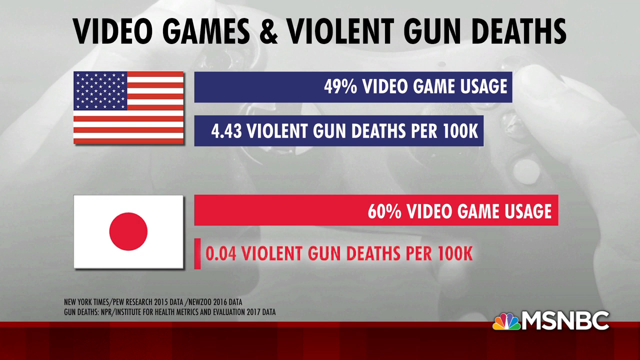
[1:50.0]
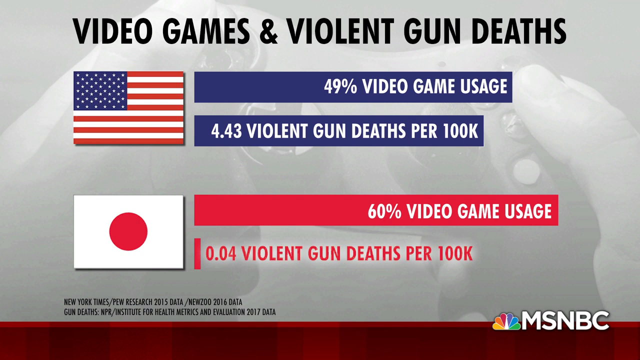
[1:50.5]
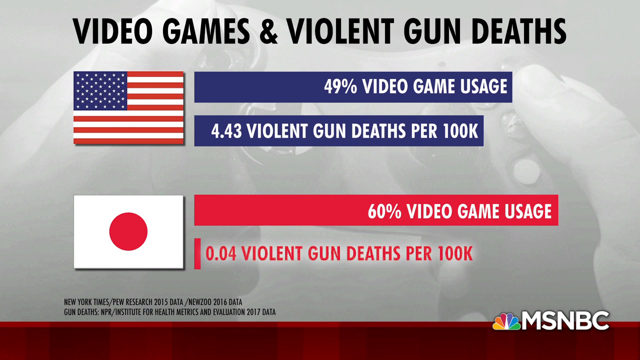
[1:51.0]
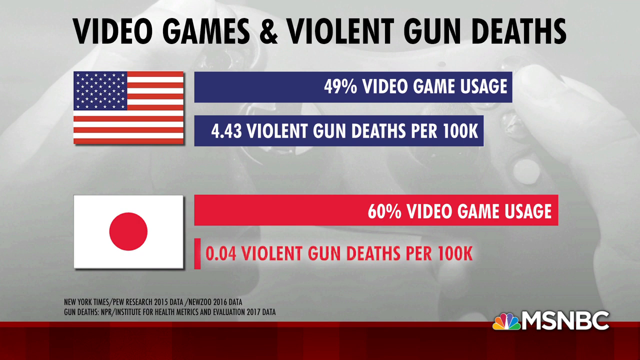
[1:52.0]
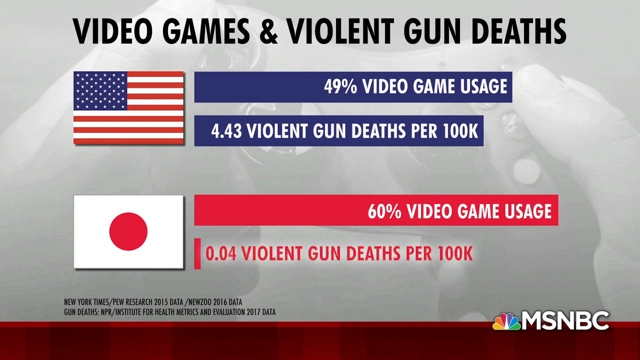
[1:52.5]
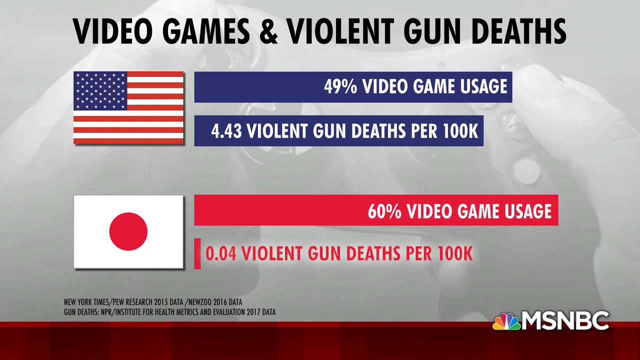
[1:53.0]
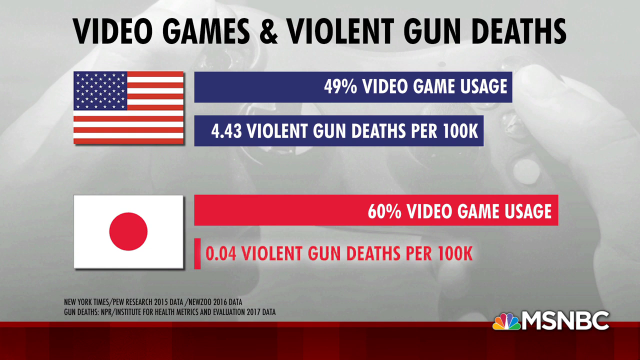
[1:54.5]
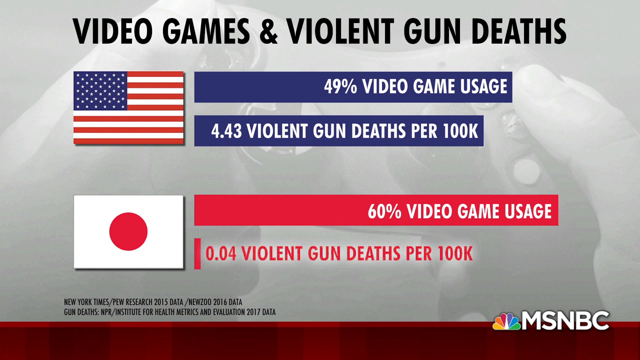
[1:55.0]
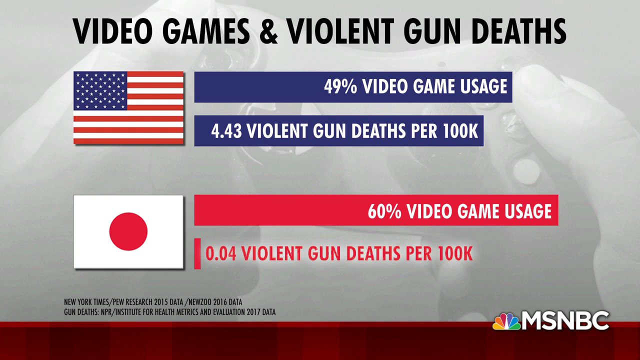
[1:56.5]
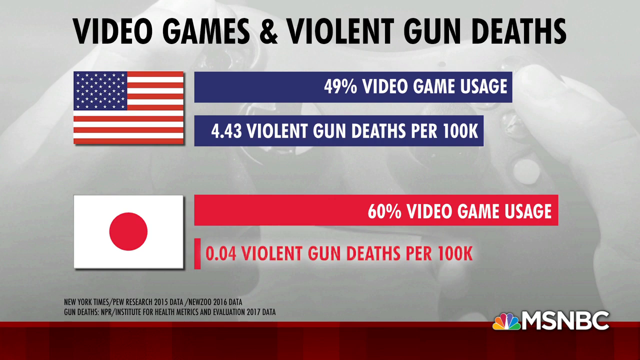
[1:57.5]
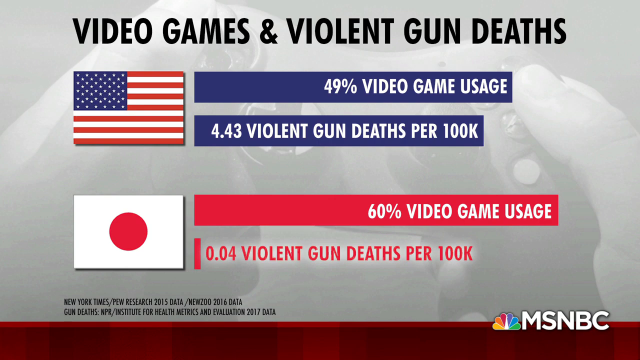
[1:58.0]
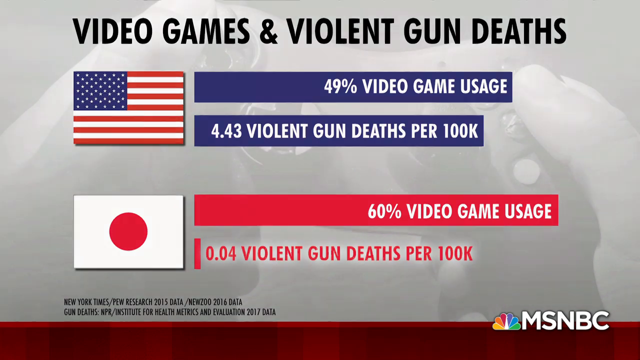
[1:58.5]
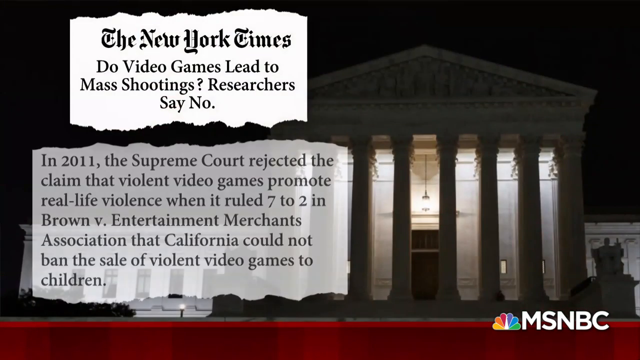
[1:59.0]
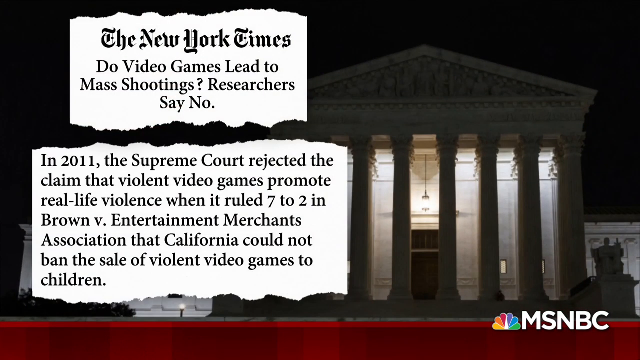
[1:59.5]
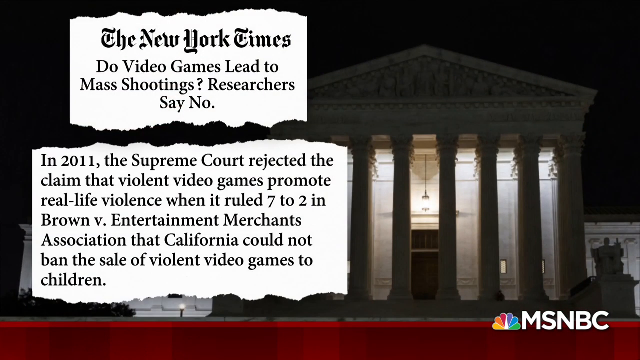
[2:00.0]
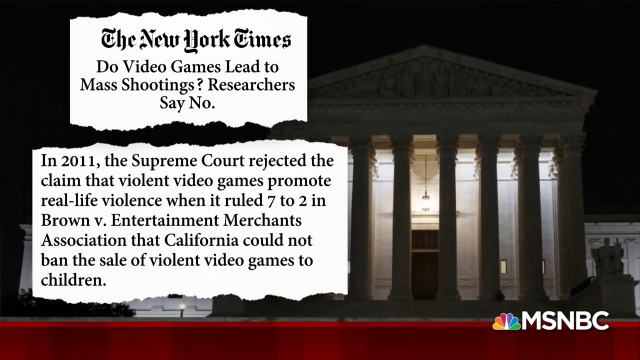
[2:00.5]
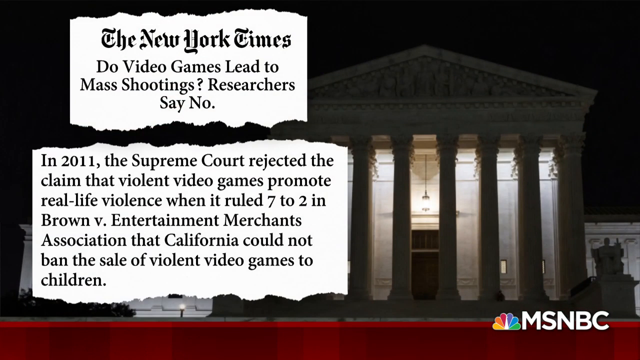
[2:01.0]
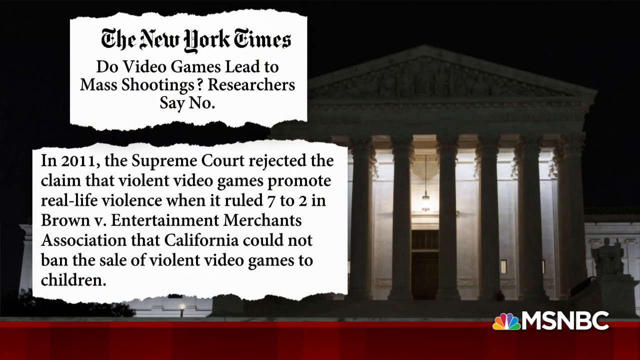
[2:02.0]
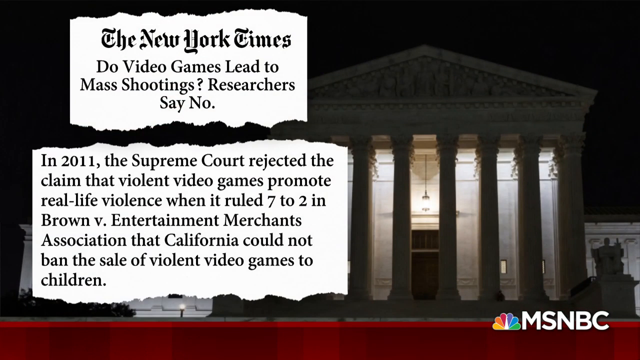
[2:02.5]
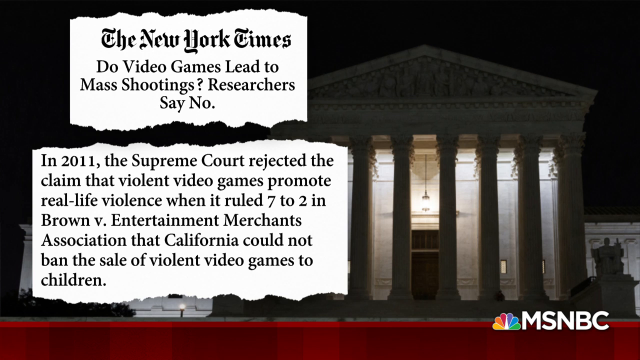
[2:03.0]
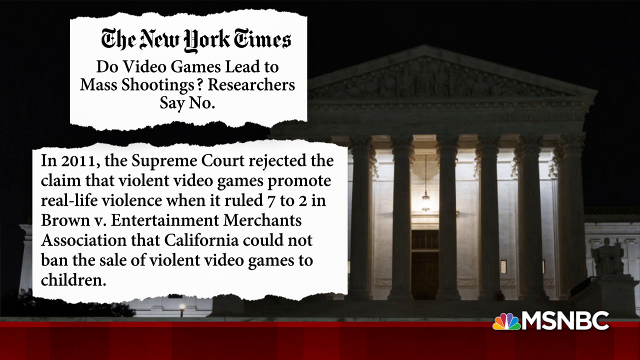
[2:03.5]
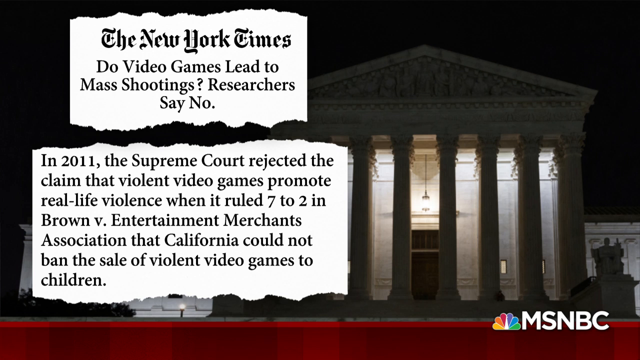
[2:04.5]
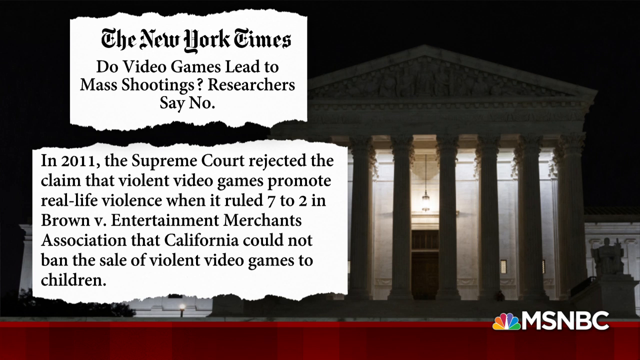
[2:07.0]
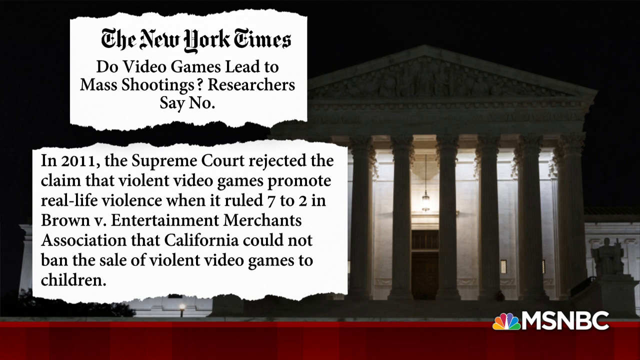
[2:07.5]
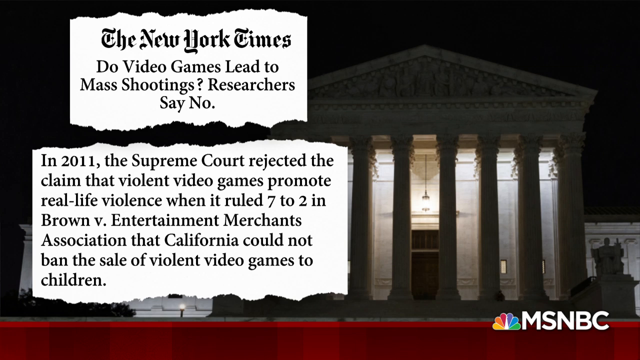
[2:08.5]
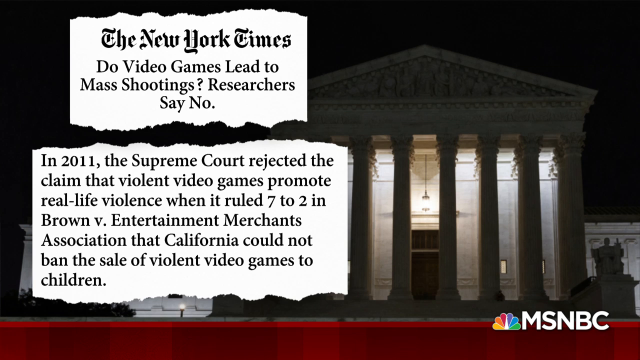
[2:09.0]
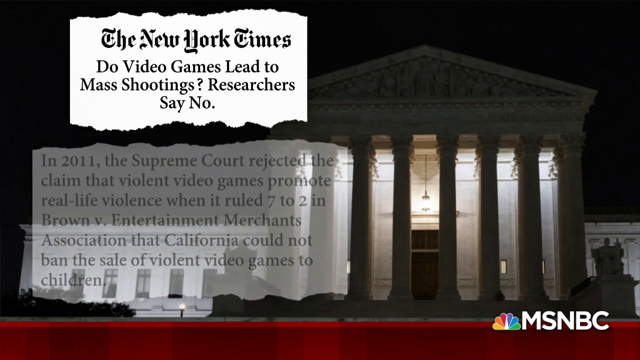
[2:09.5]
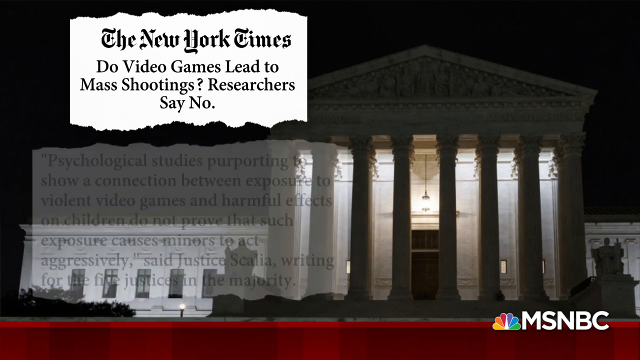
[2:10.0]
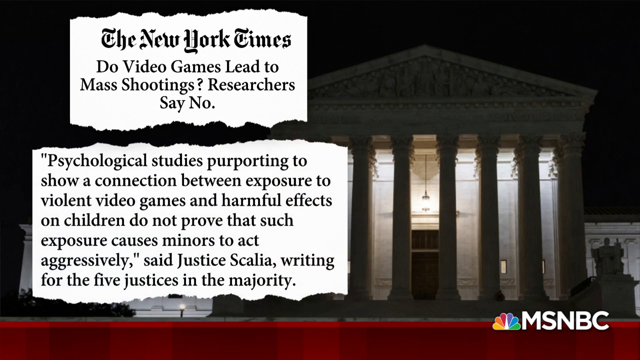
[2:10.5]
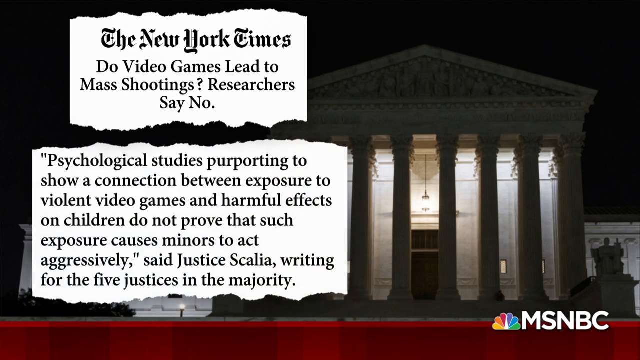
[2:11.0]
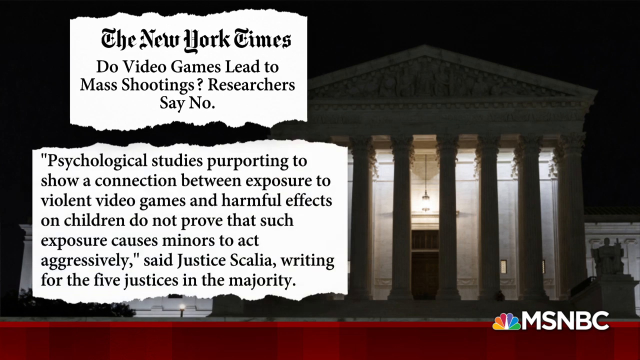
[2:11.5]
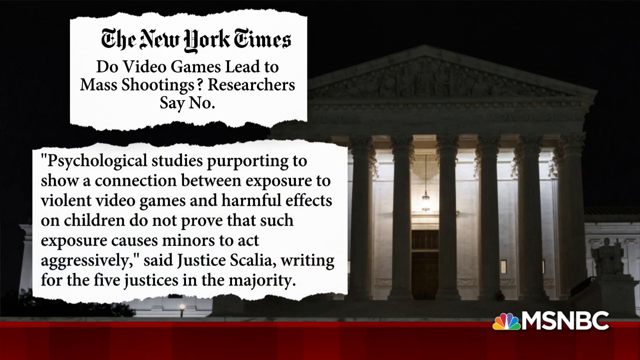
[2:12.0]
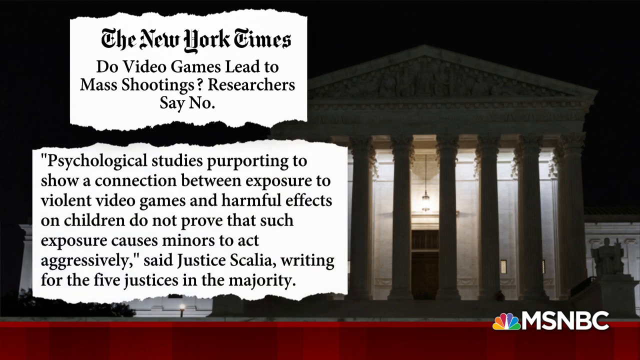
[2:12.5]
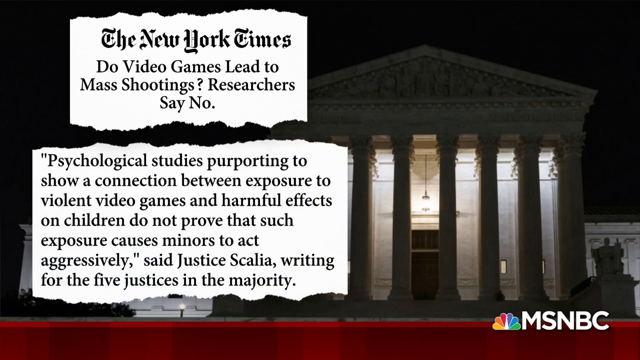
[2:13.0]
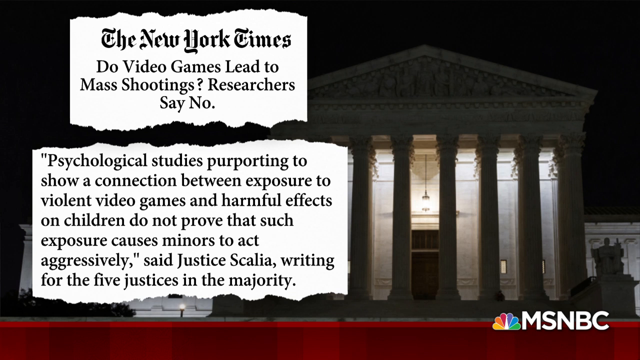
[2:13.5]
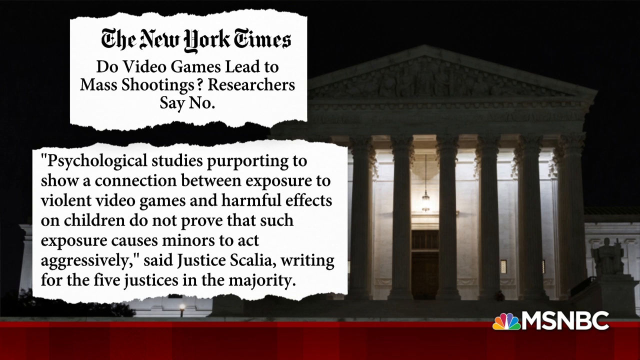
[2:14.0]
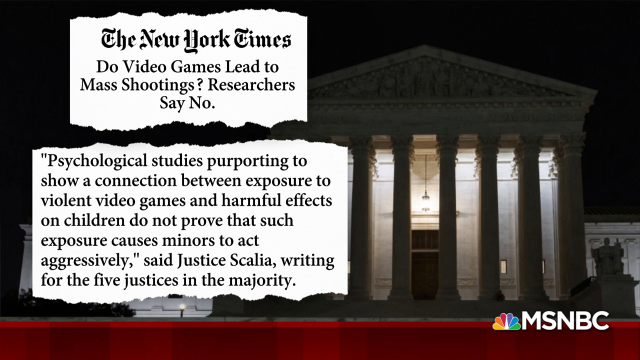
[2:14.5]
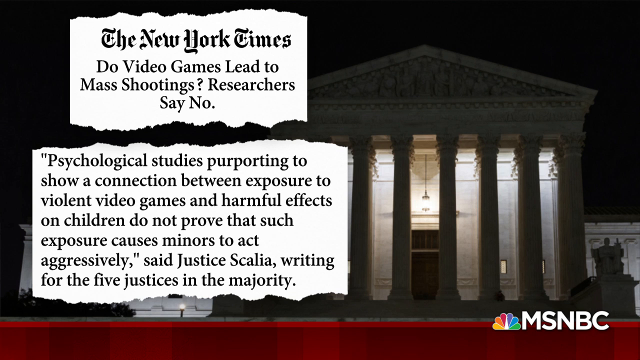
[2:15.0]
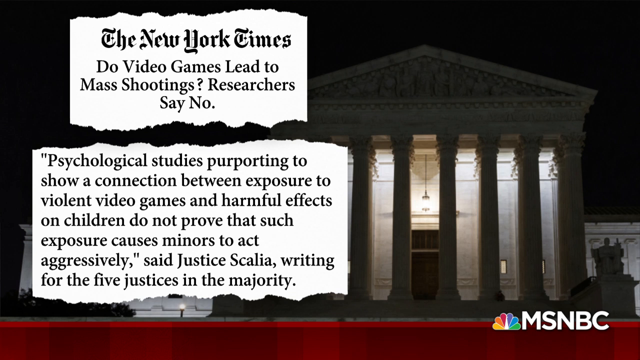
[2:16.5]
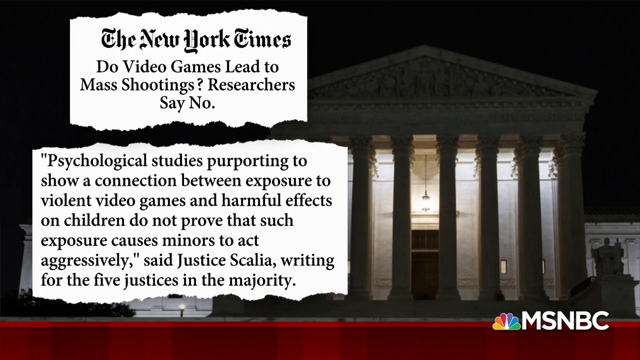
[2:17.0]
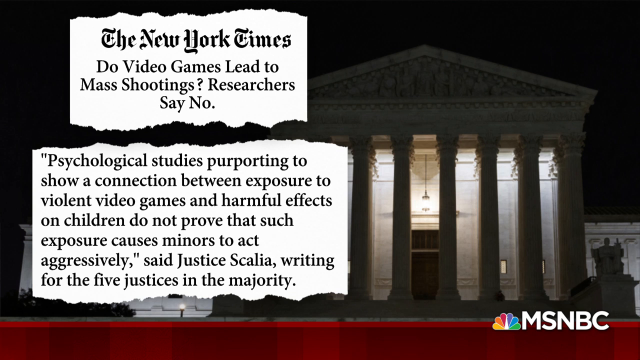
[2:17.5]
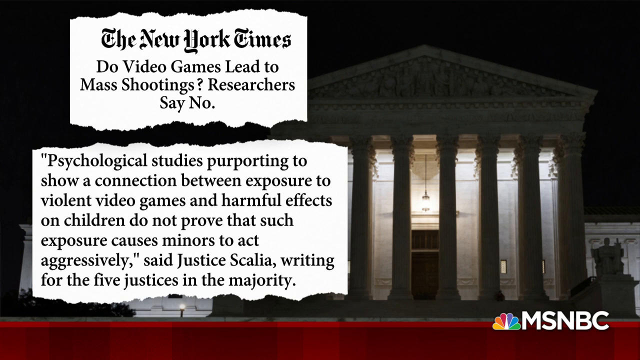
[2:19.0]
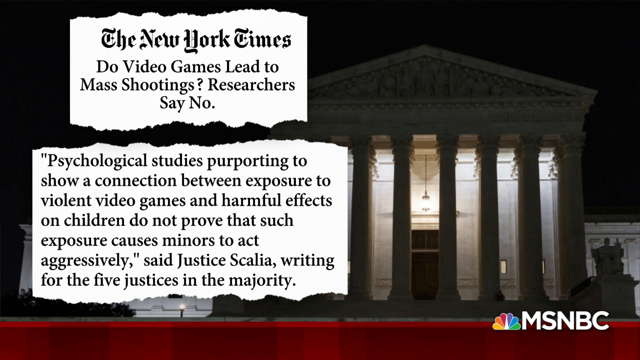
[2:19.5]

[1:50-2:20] The screen compares video games and violent gun deaths. Text reads "do video games lead to mass shootings? researcher says no." Further text reads "in 2011 supreme court rejected the claim that violent video games promote real-life violence" and "psychological studies purporting to show a connection between exposure to violent video games and harmful effects on children do not prove that such exposure causes".